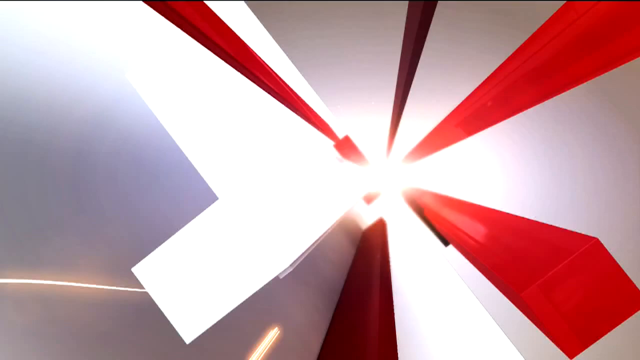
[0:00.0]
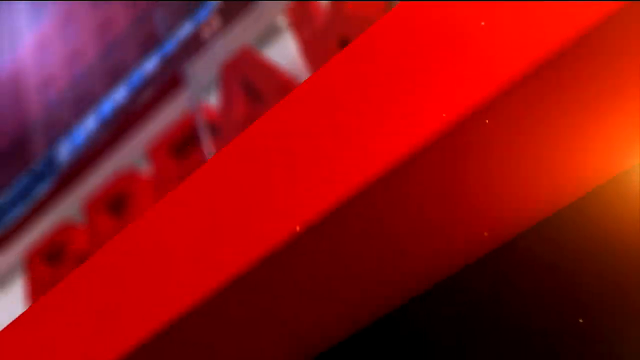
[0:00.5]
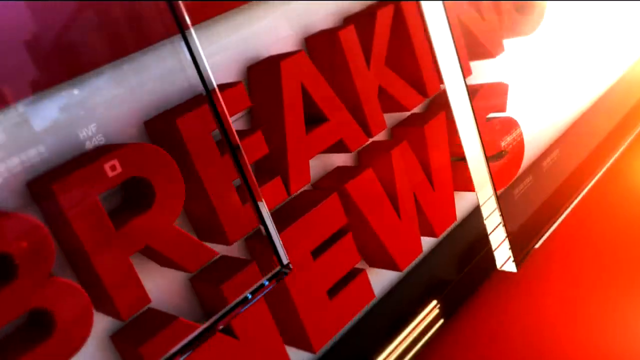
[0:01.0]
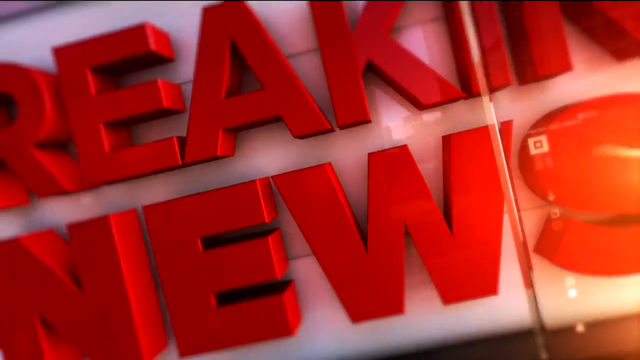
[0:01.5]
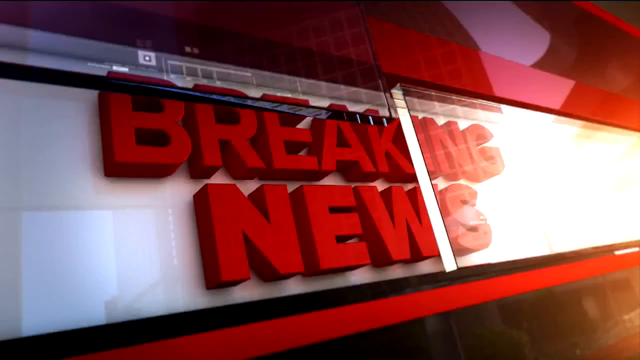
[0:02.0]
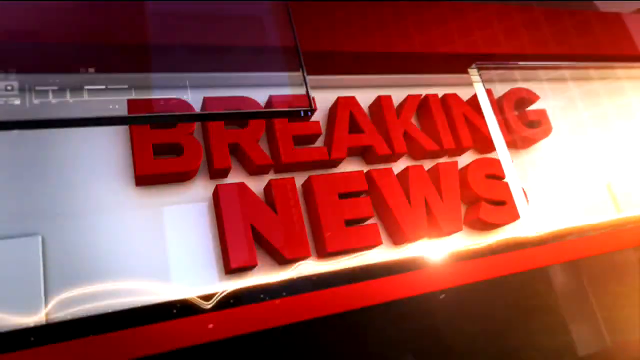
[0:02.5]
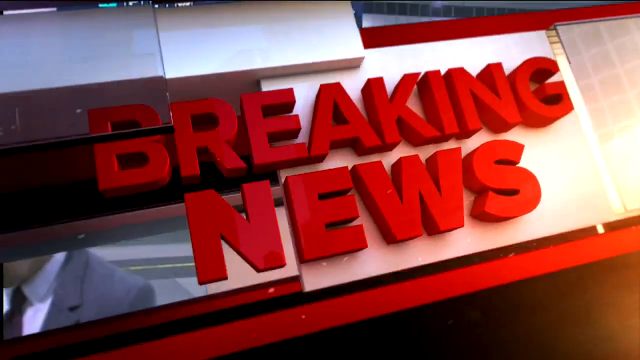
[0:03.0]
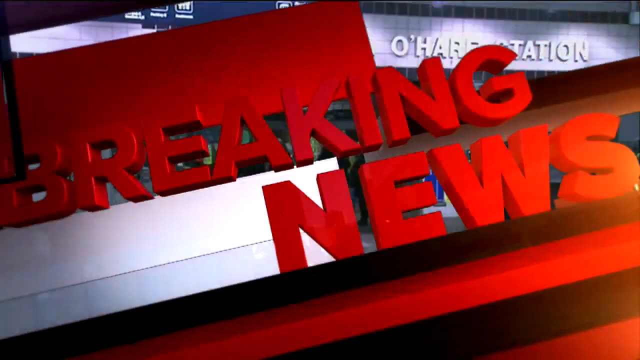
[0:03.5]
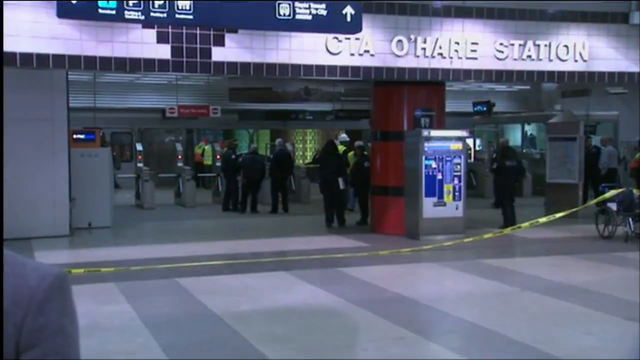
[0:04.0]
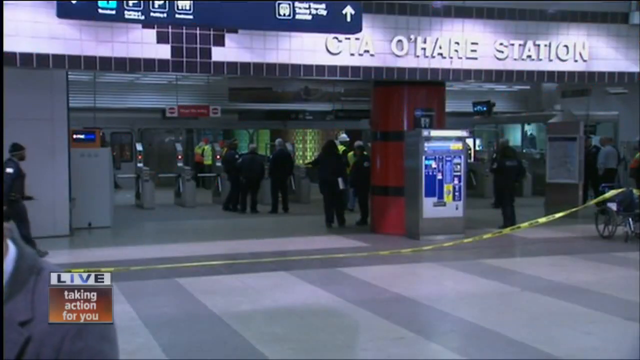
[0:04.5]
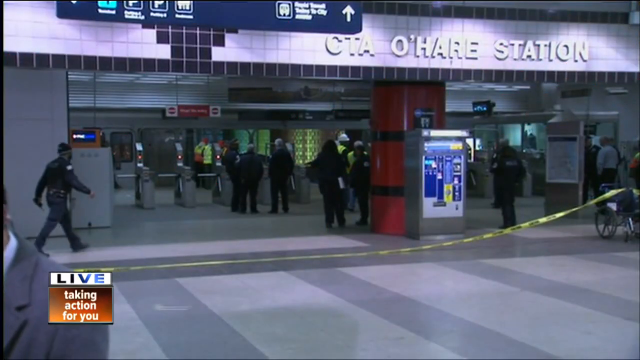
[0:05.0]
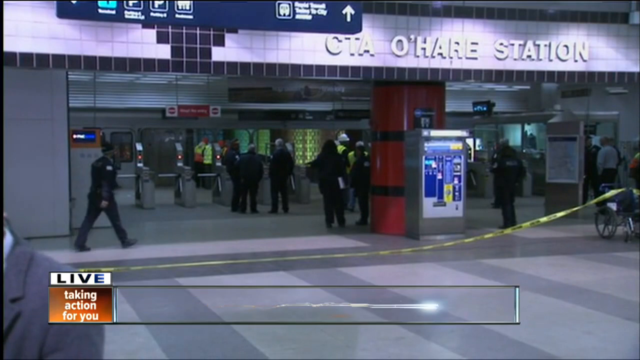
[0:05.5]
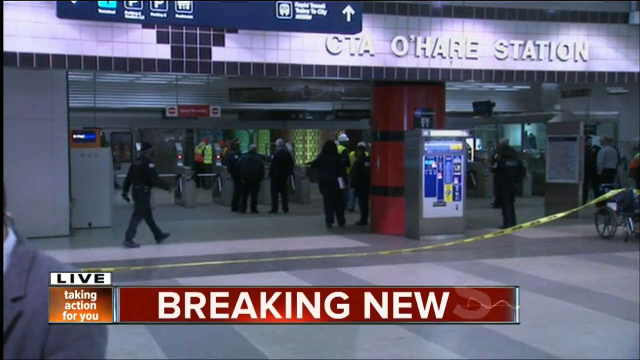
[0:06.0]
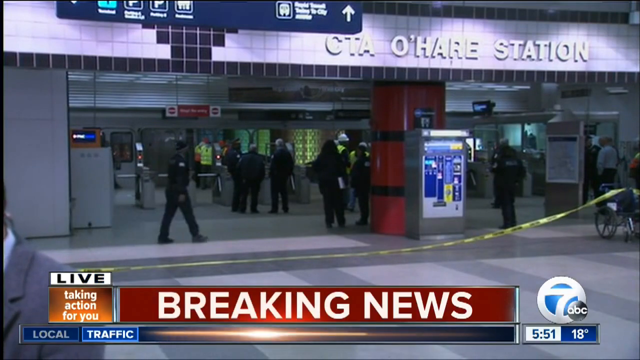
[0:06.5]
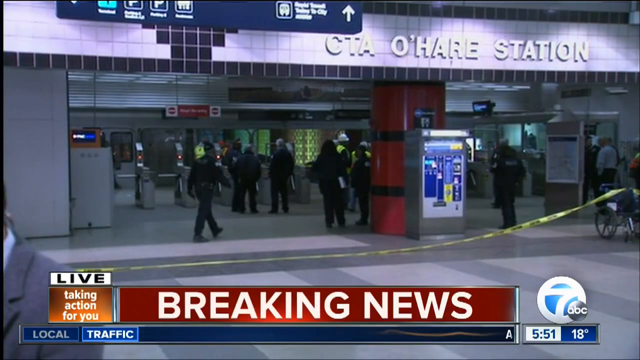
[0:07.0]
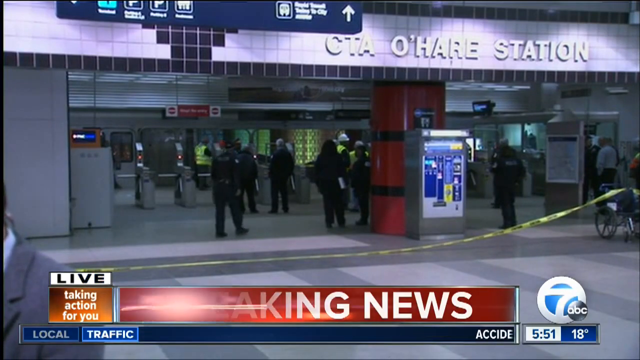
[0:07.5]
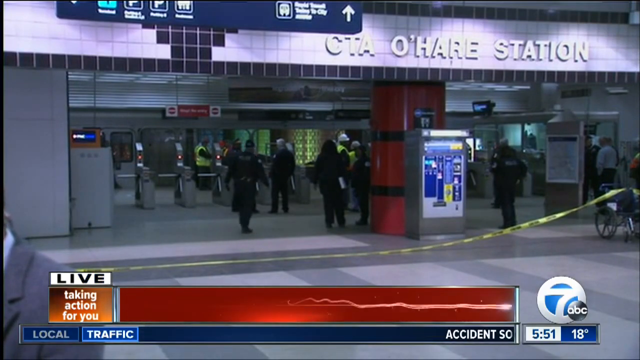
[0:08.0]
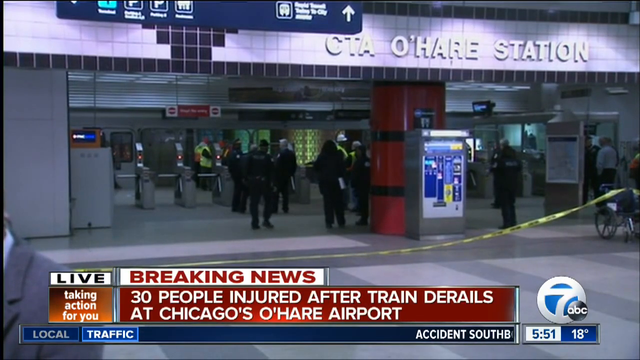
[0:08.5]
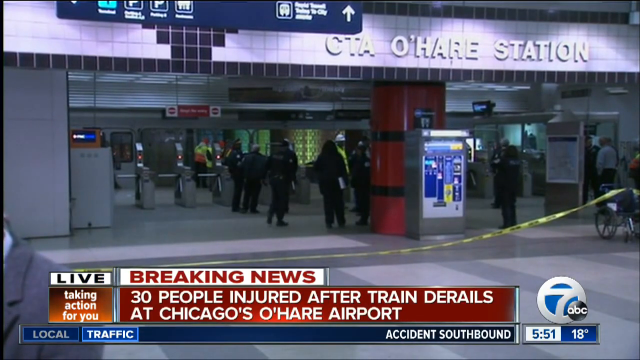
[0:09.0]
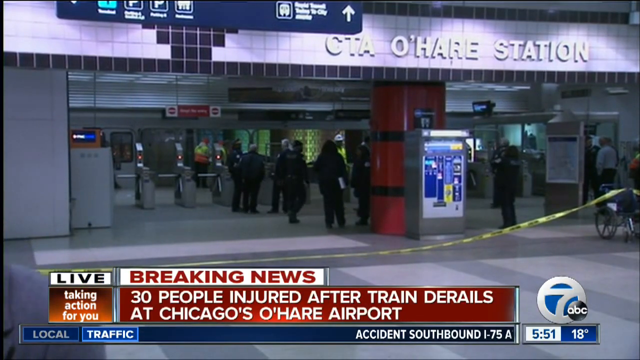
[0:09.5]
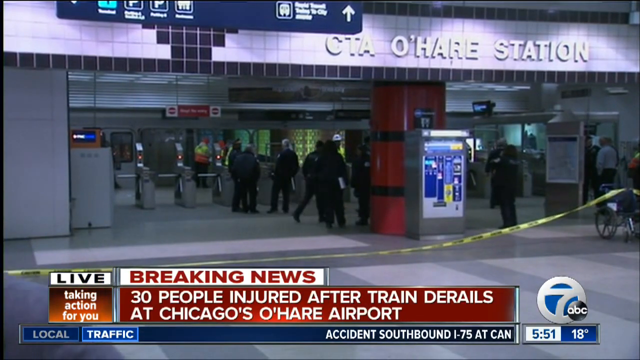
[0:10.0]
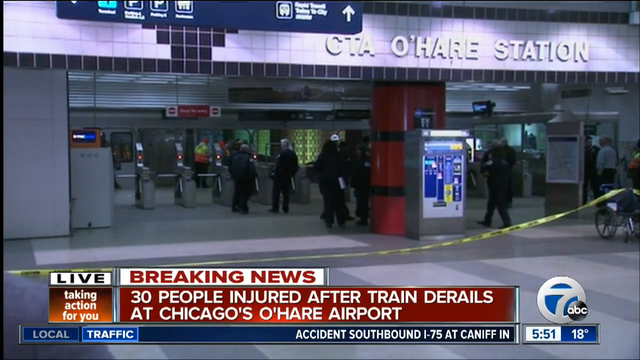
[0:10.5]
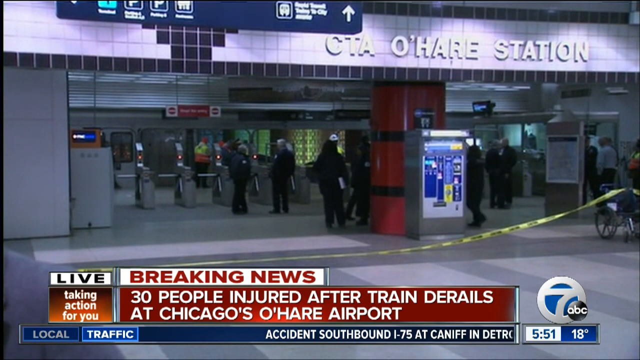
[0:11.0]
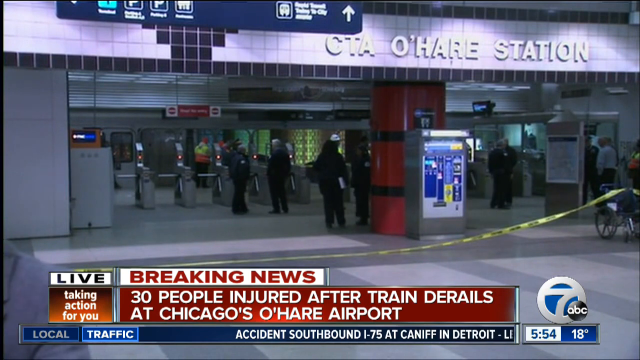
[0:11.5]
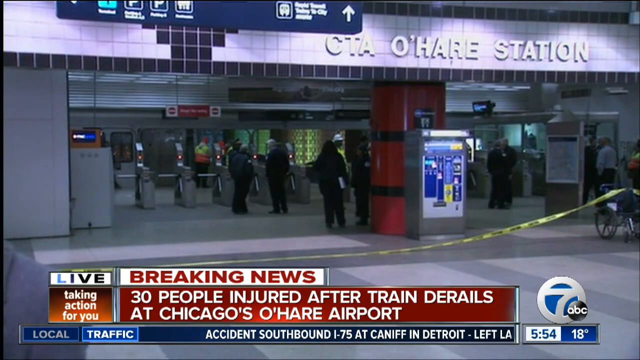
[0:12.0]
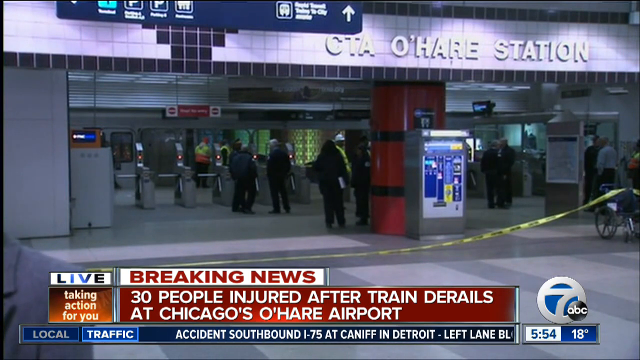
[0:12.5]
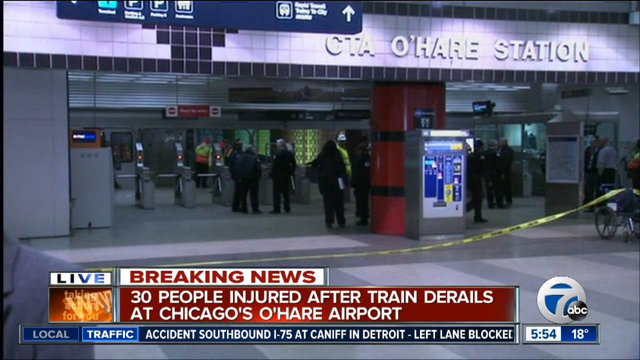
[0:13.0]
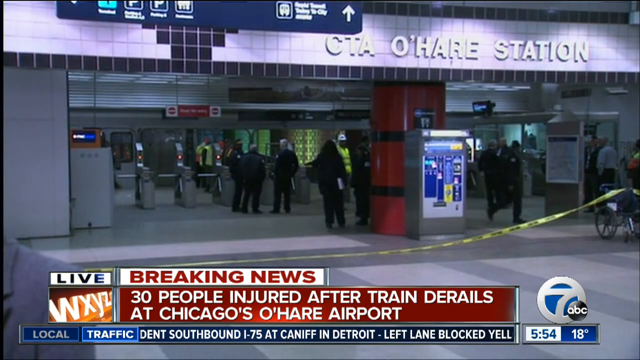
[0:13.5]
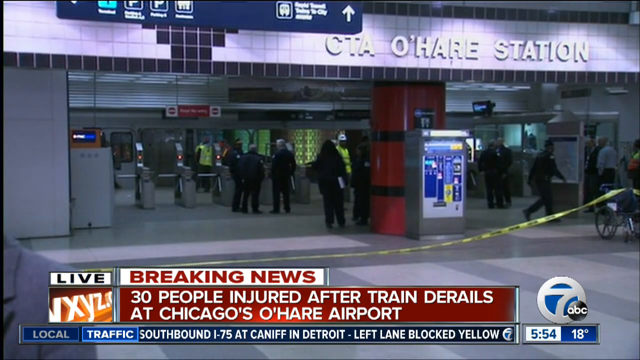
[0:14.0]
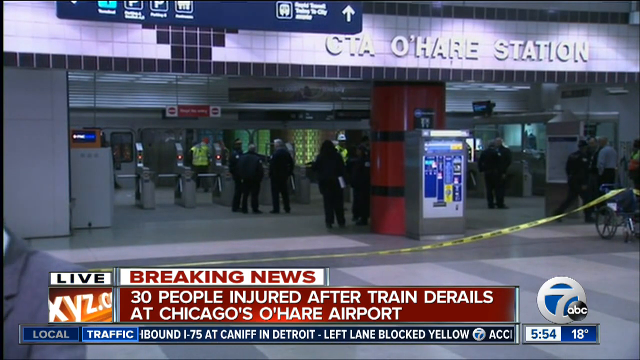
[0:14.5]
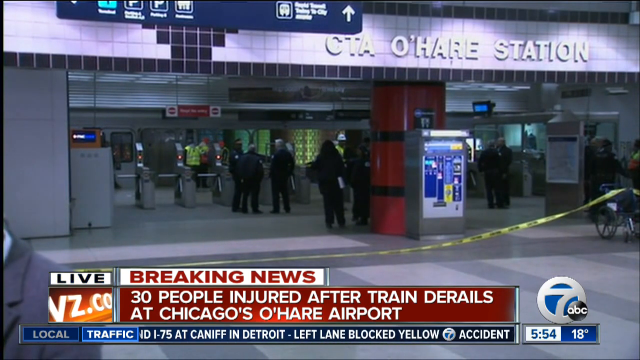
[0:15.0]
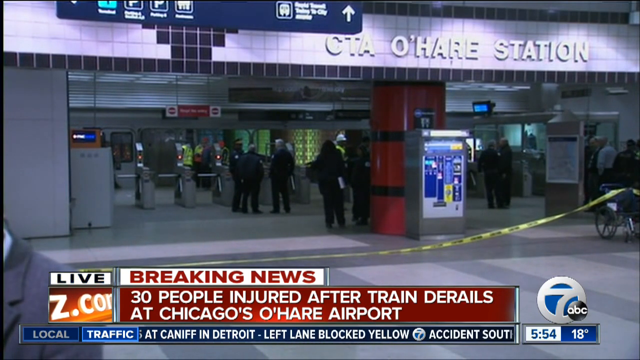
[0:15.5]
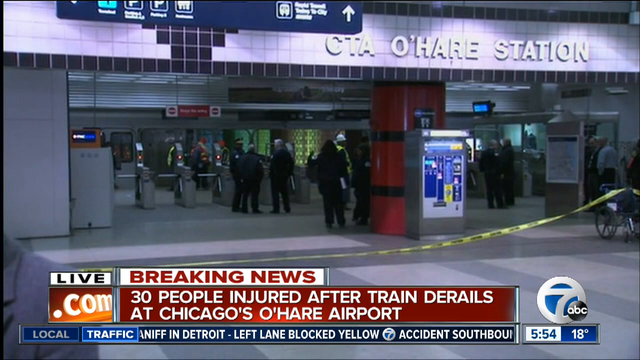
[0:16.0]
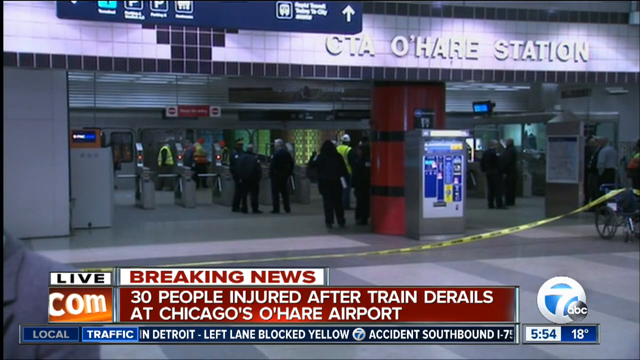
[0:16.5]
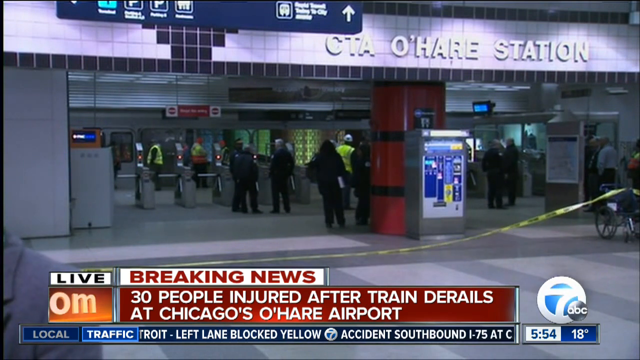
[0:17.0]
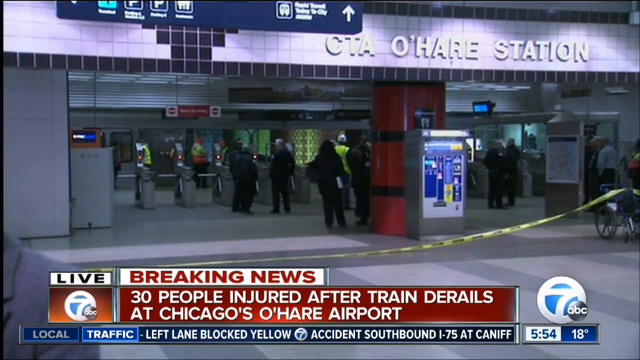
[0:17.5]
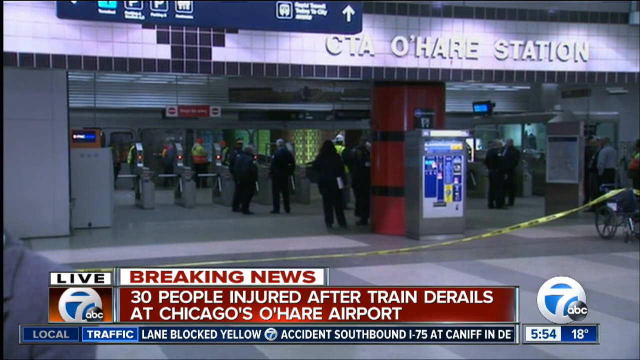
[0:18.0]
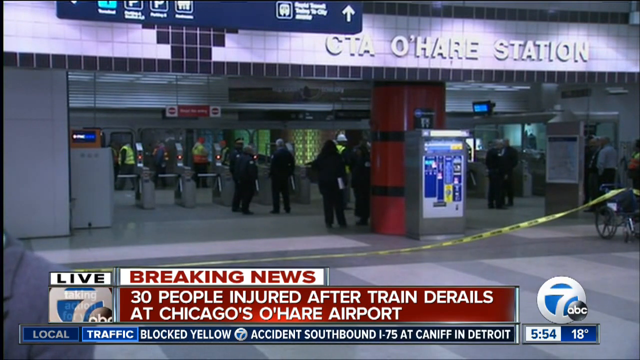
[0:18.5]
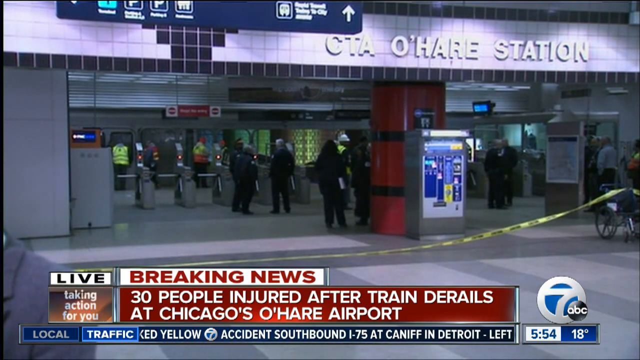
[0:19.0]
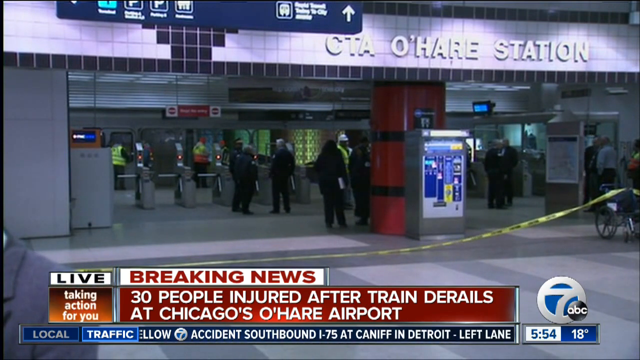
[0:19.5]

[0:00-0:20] The video opens on multiple vivid colors: reds, whites, blacks, and yellows. It then cuts to an image with "O'Hare station" at the very top. The location is a transportation location. There are multiple people who look like officers, and there is police tape. Text at the bottom says "live." A big red pole is in the middle of the scene. There is a place where people enter, with at least four stations where people enter by pushing a bar. Several people who look like investigators or officers are discussing a situation. A sign at the very bottom says "Breaking News." There is an icon for the channel, ABC, and another icon with the number seven, probably for the local news. Underneath both icons are a time, 551, and the weather, 18 degrees. People are walking around.